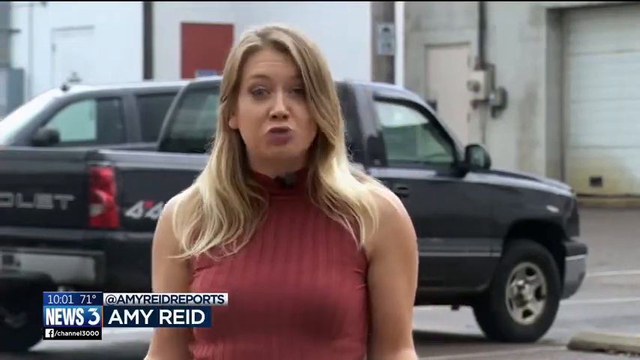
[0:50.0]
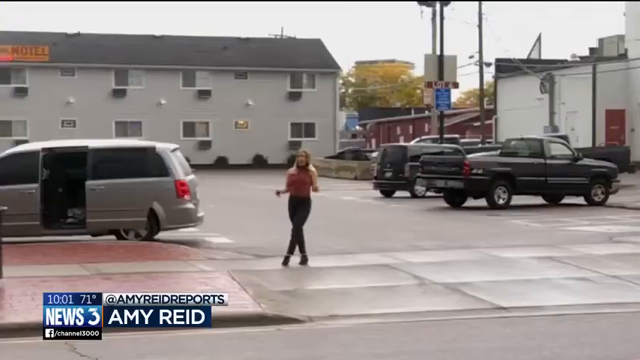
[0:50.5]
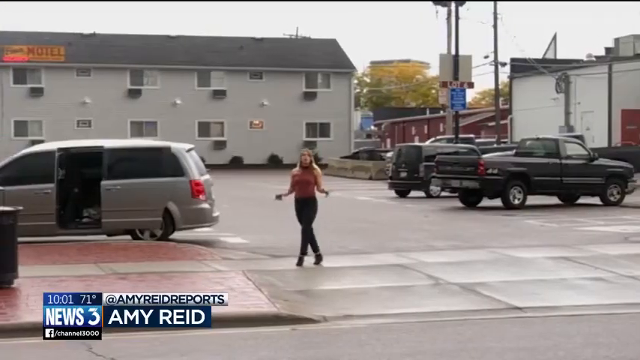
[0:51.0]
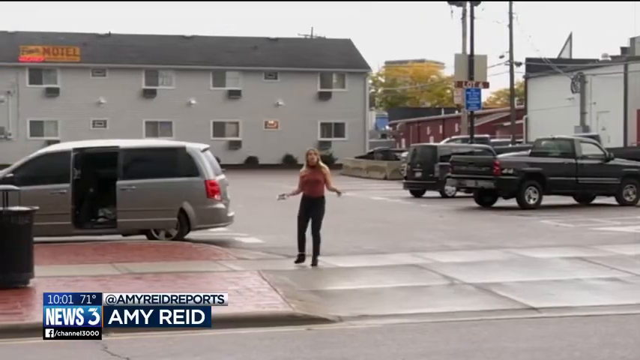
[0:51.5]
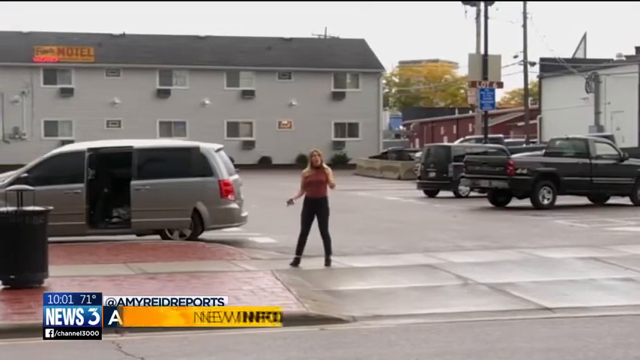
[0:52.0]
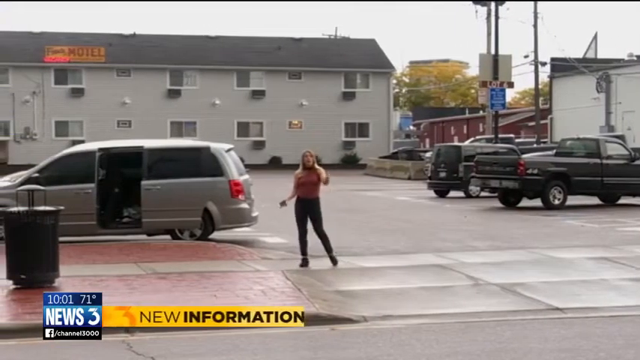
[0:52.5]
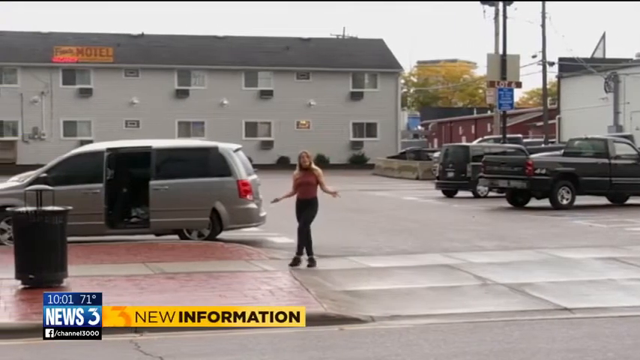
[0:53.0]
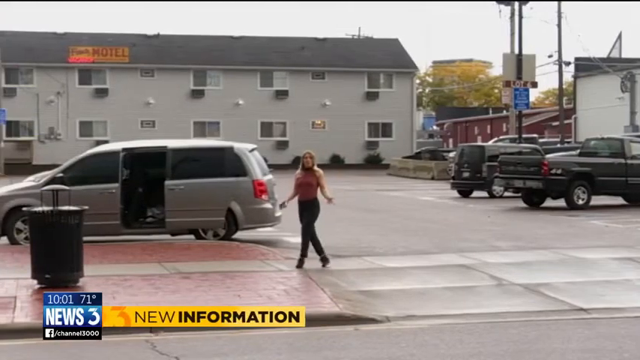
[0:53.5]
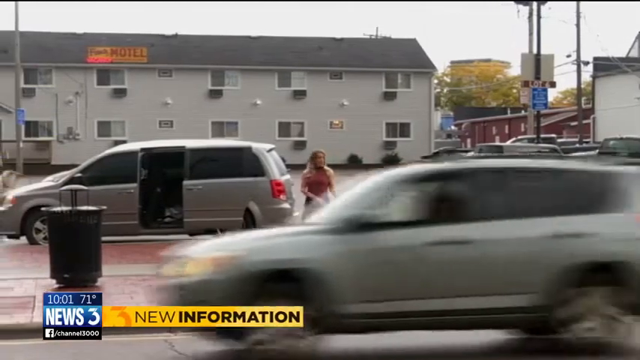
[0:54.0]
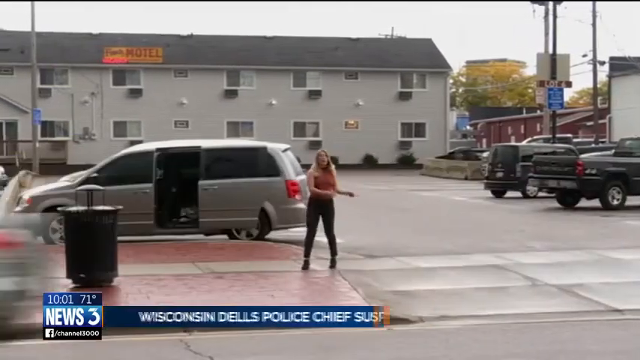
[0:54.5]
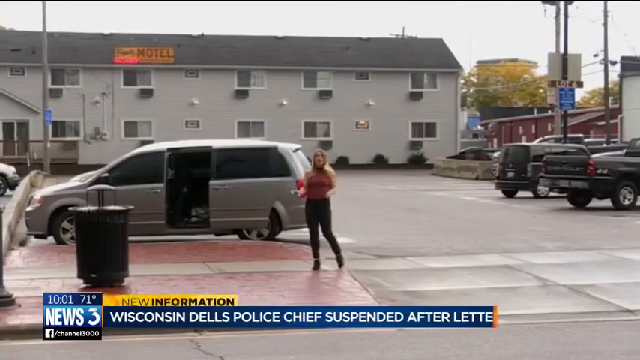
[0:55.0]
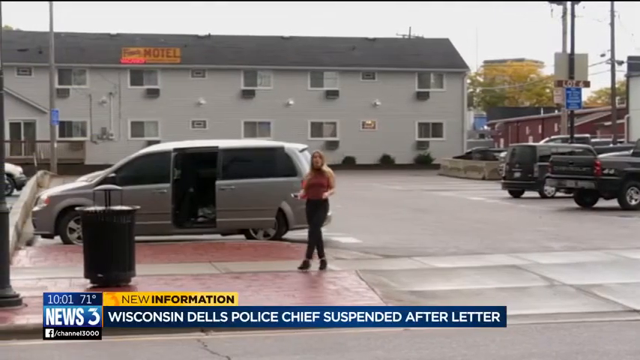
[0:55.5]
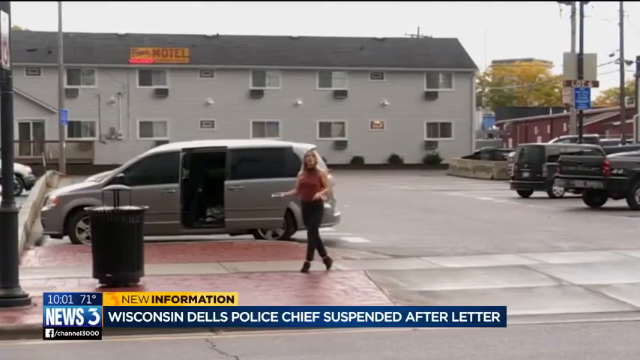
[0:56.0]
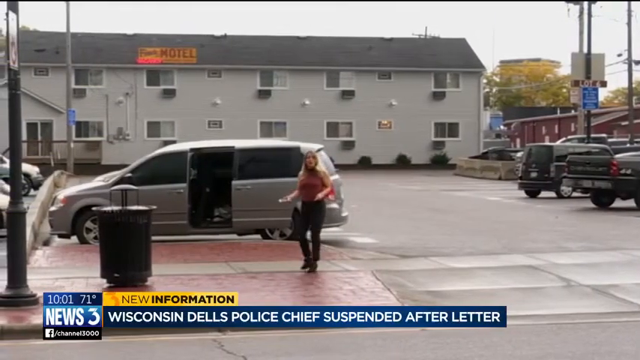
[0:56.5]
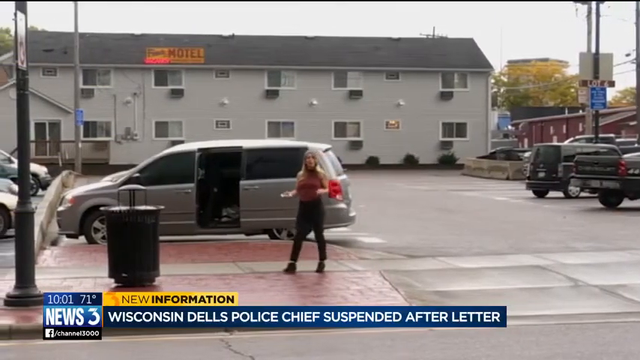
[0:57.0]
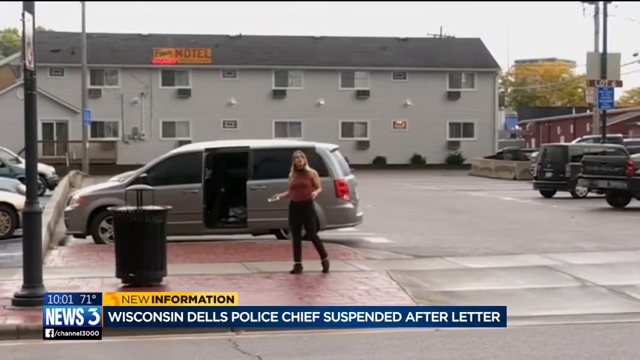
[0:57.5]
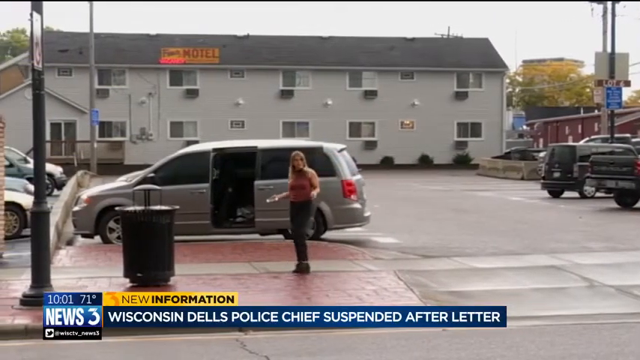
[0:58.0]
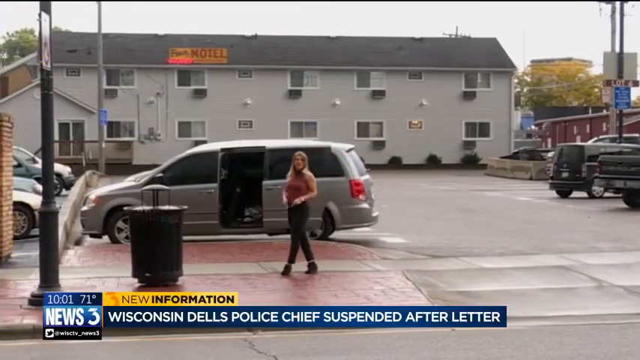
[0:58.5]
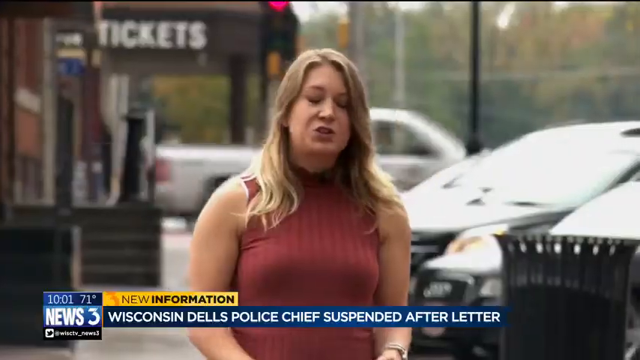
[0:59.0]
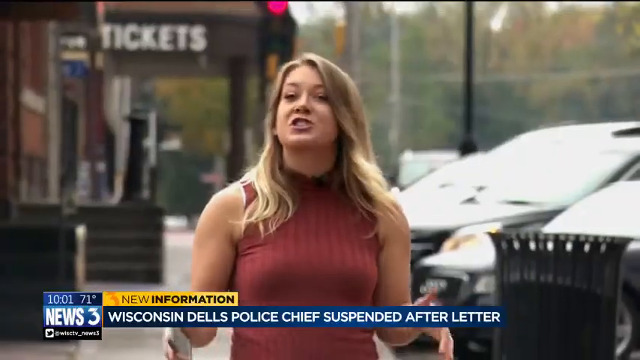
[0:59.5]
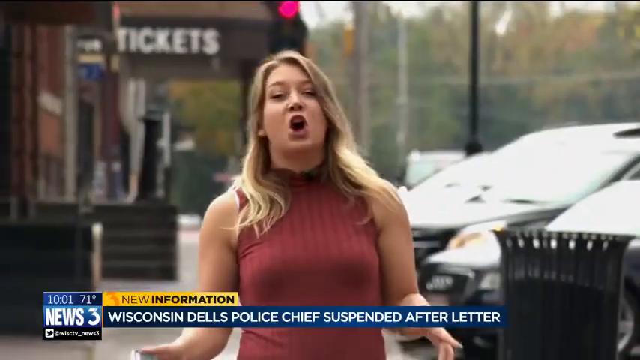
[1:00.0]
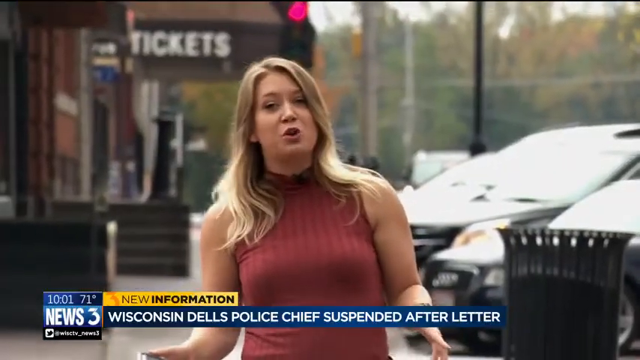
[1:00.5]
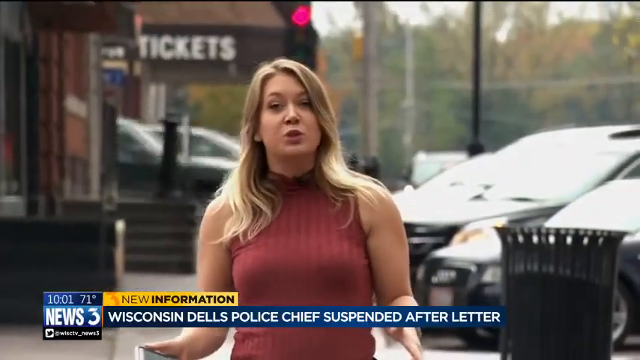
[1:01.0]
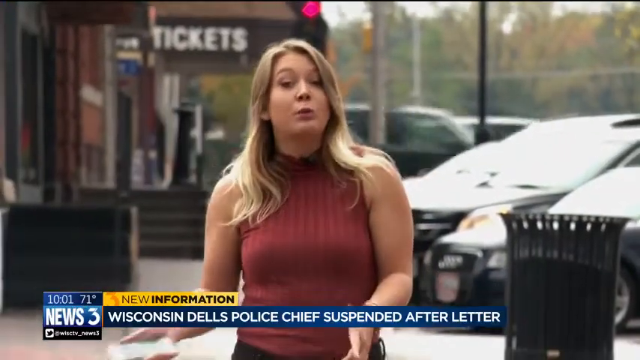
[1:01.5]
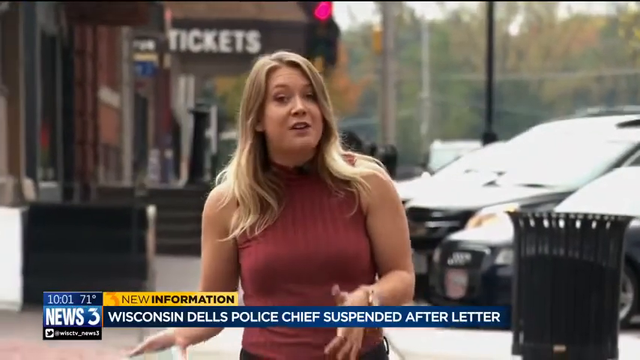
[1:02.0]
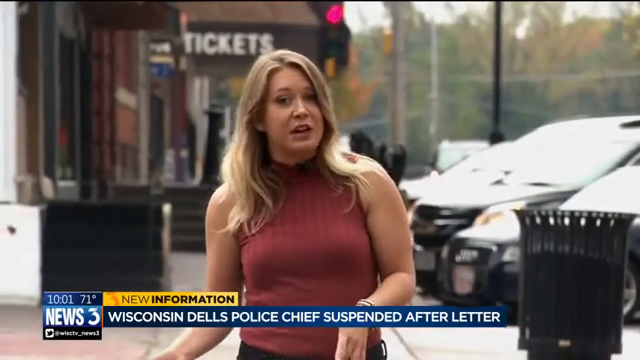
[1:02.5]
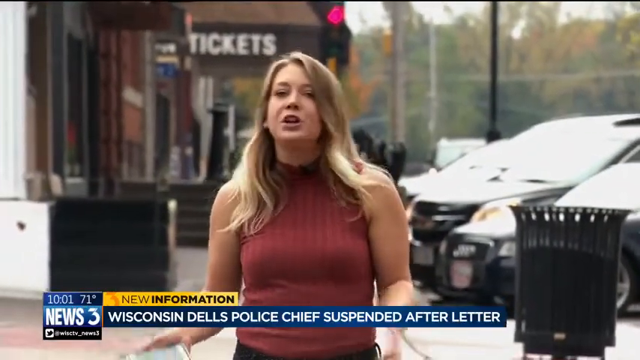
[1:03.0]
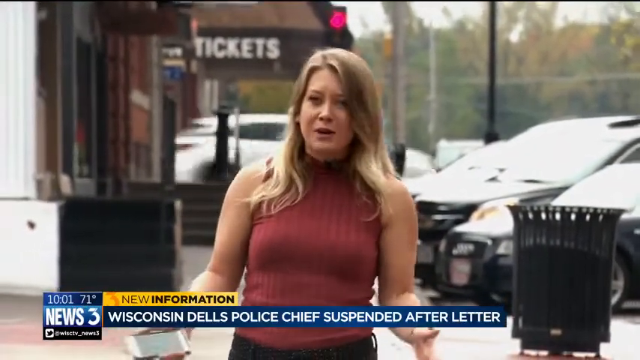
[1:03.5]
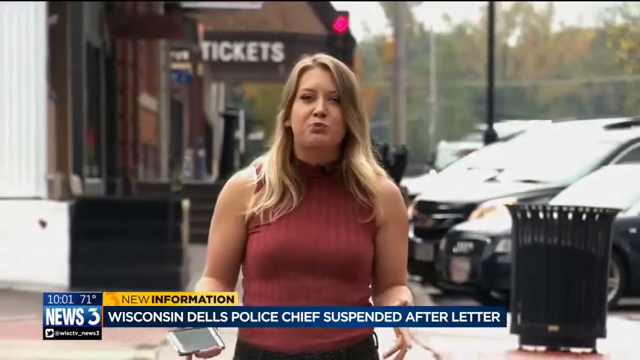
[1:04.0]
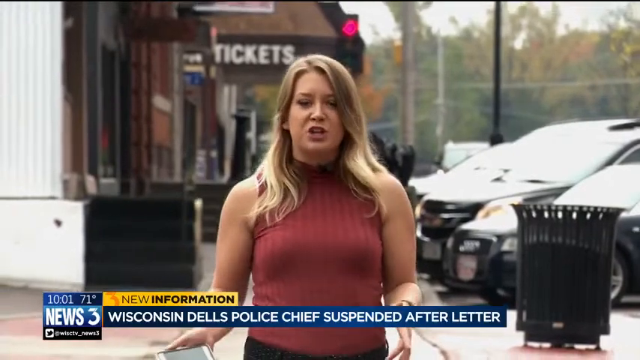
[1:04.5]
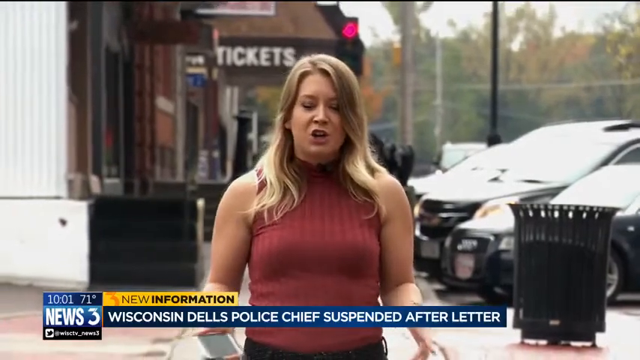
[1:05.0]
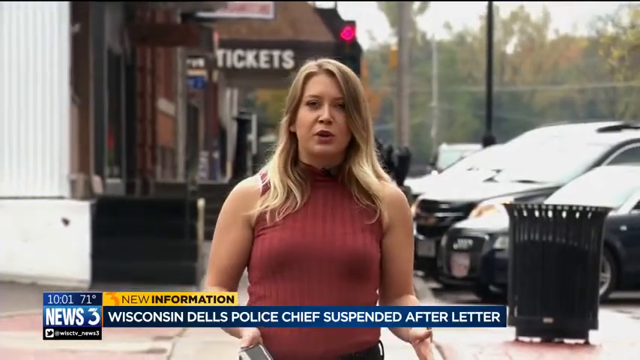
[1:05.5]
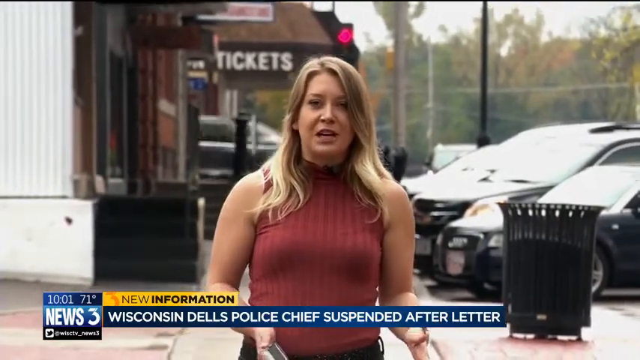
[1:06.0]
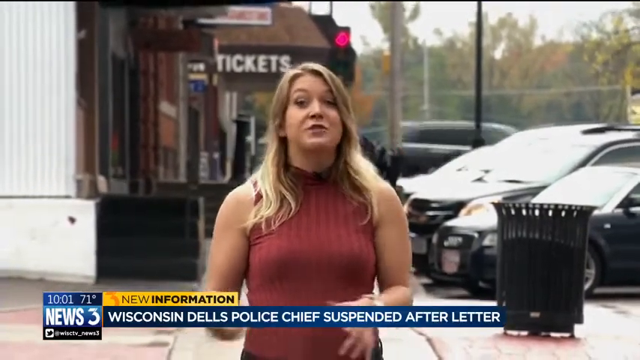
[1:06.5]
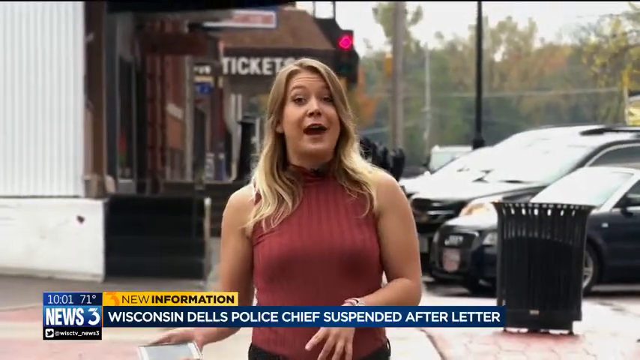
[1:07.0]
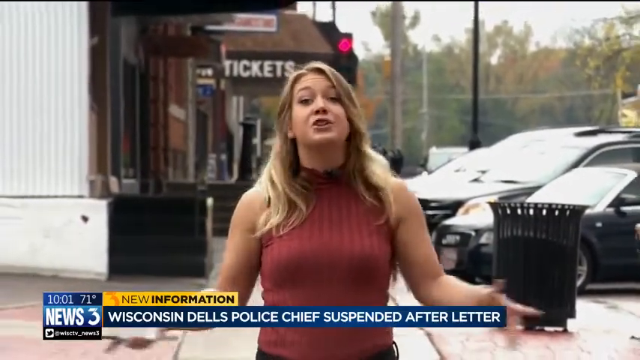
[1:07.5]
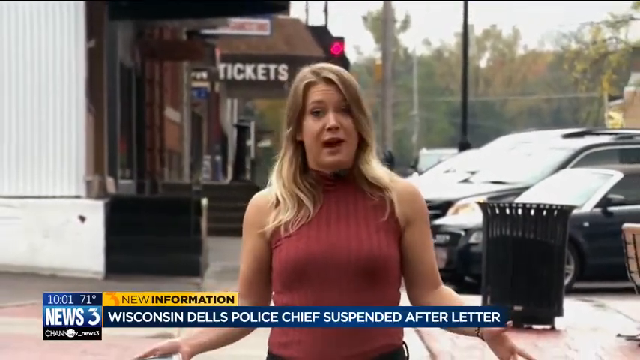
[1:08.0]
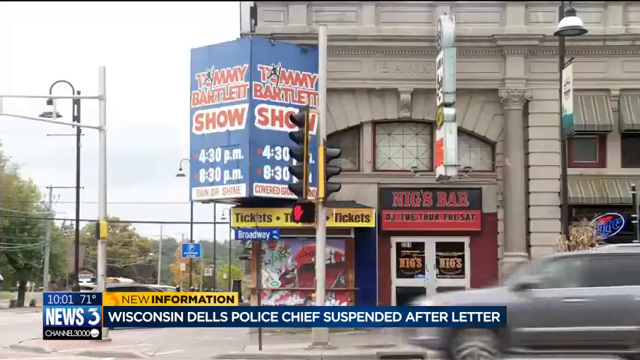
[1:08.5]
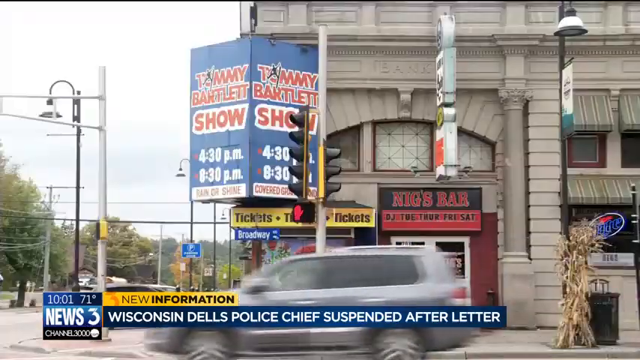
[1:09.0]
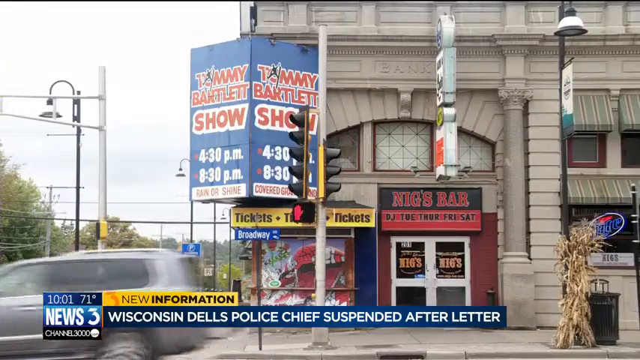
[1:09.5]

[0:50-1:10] The Channel 3 News report continues with a blonde reporter, identified on screen as Amy Reed, reporting outdoors. She has a microphone attached to the top of her outfit near the neck collar and wears black pants. The on-screen text shows Channel 3 News information and "Wisconsin Dales police chief suspended after letter." She is walking, with cars behind her. It is daytime, with sunlight visible.